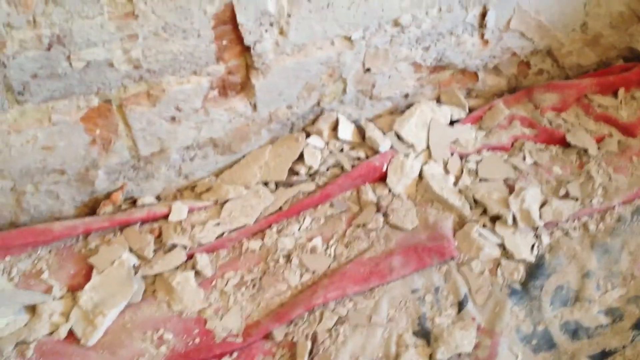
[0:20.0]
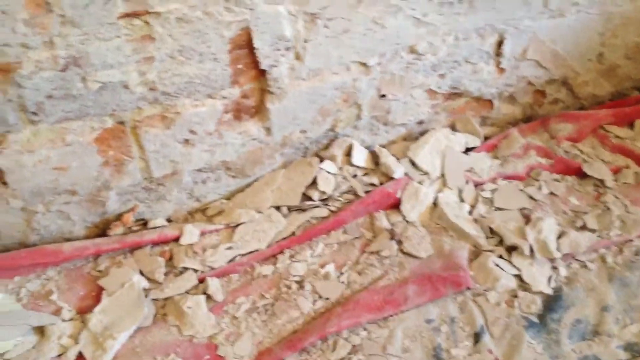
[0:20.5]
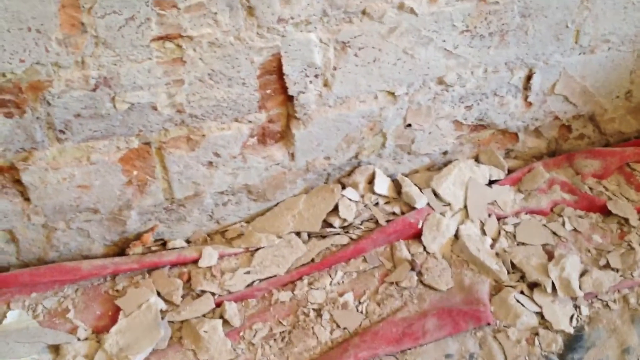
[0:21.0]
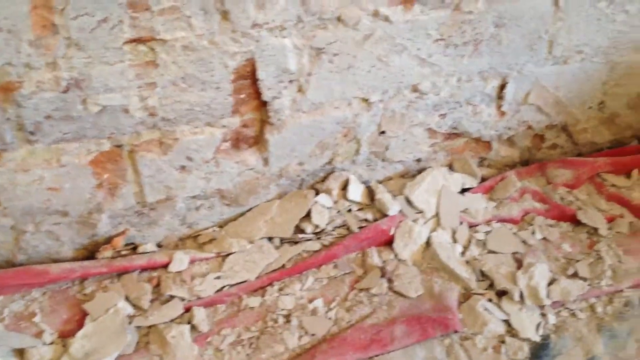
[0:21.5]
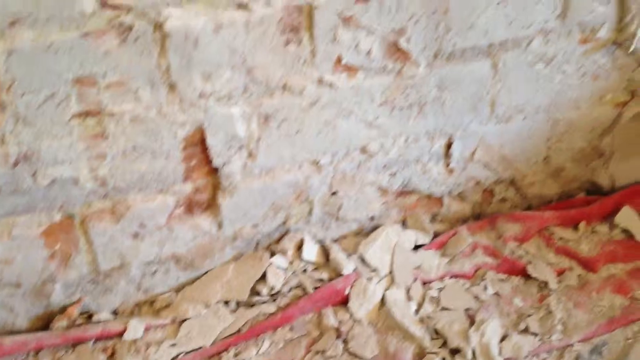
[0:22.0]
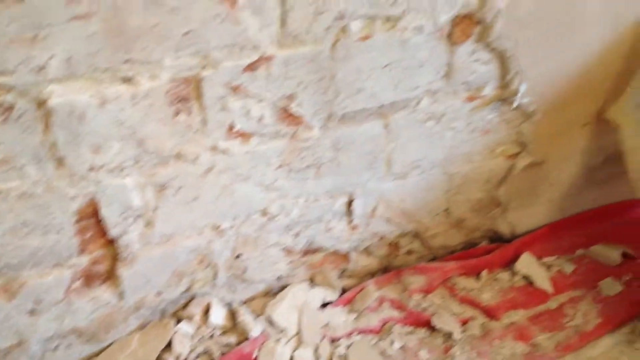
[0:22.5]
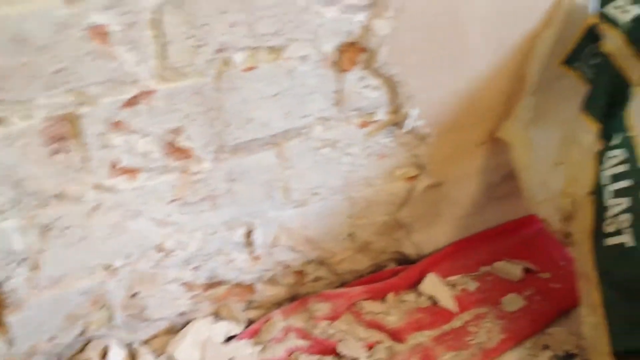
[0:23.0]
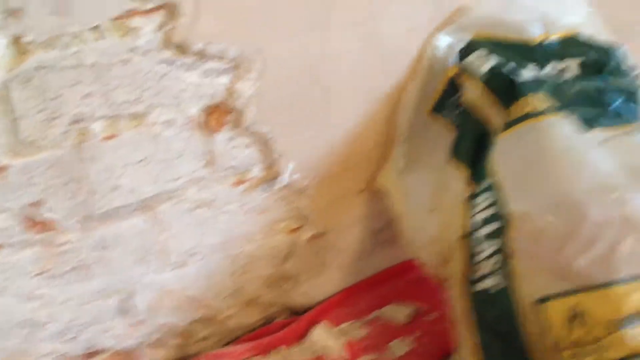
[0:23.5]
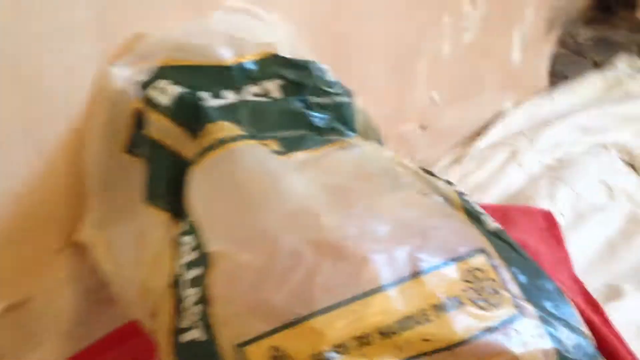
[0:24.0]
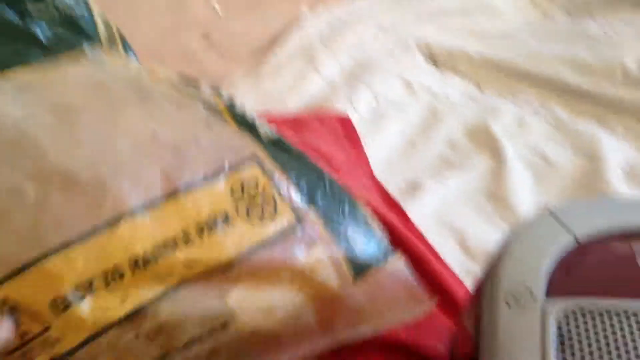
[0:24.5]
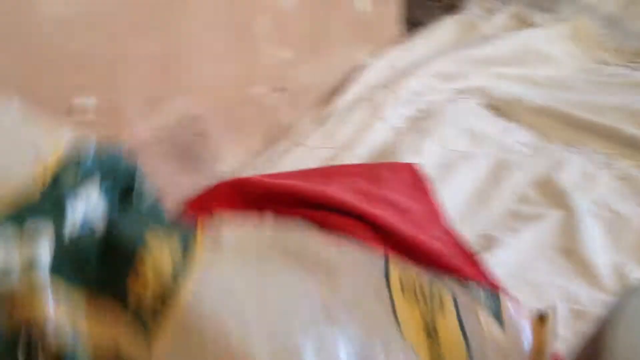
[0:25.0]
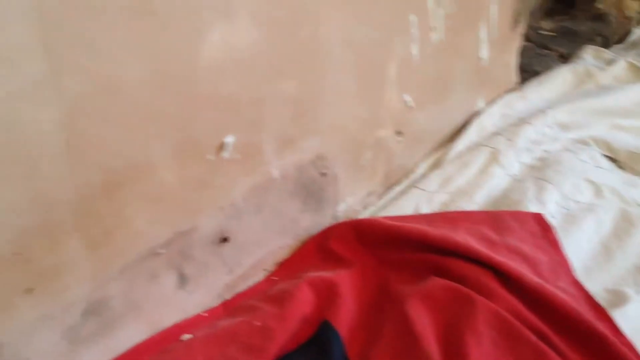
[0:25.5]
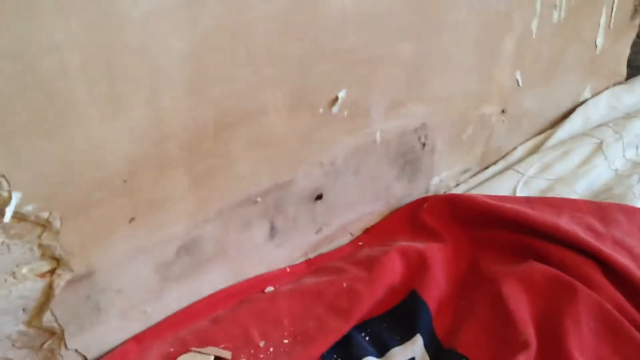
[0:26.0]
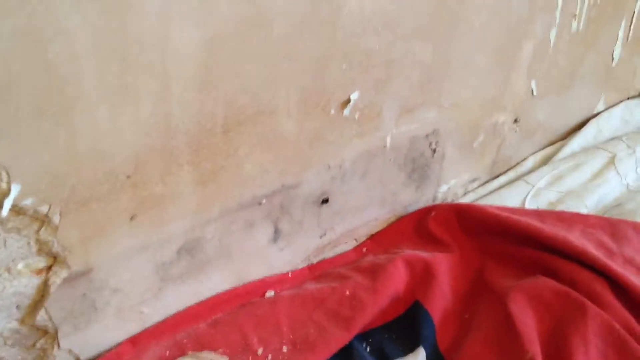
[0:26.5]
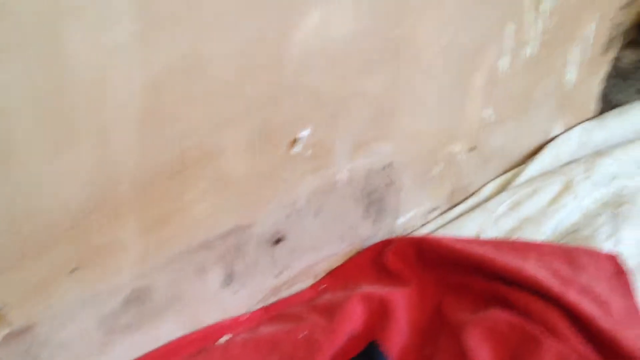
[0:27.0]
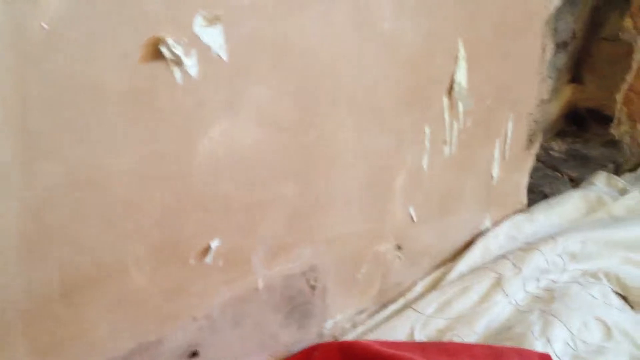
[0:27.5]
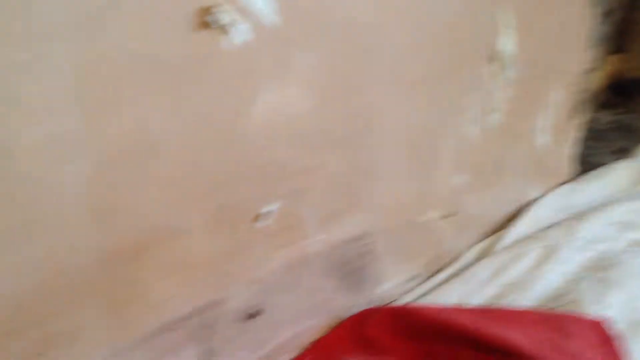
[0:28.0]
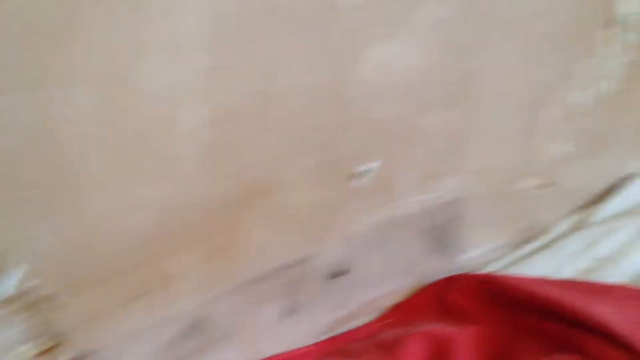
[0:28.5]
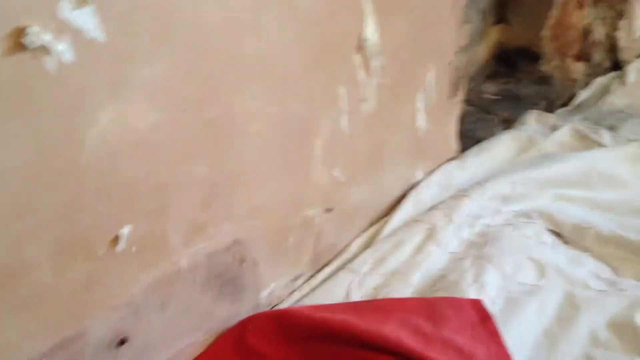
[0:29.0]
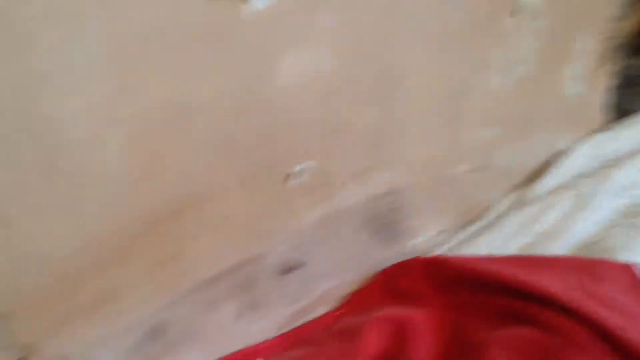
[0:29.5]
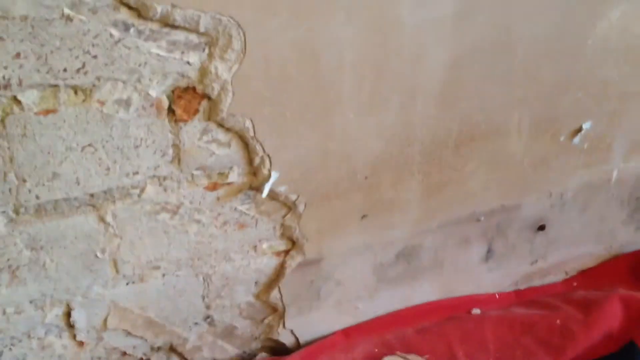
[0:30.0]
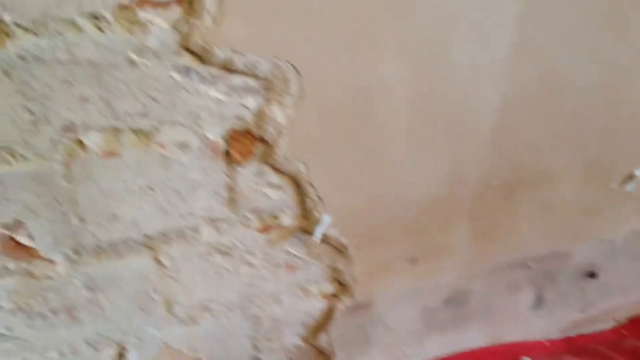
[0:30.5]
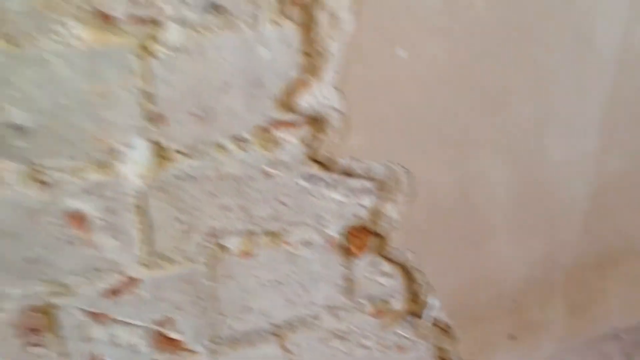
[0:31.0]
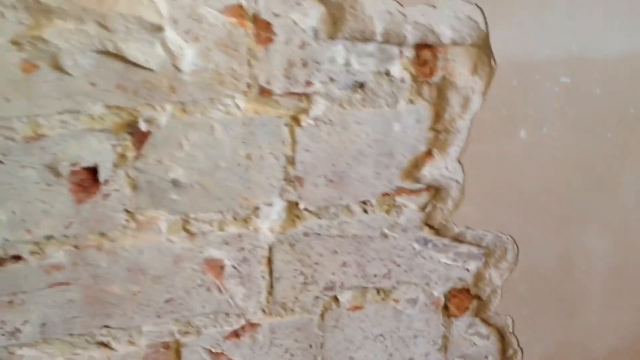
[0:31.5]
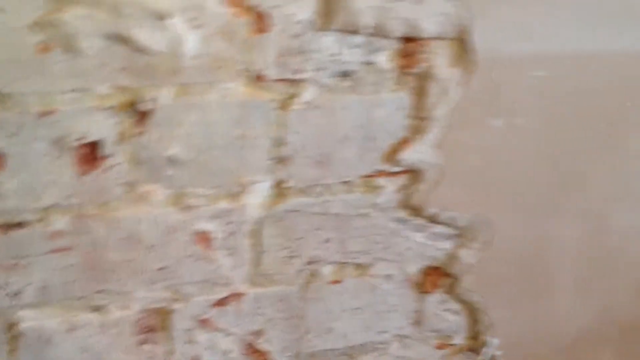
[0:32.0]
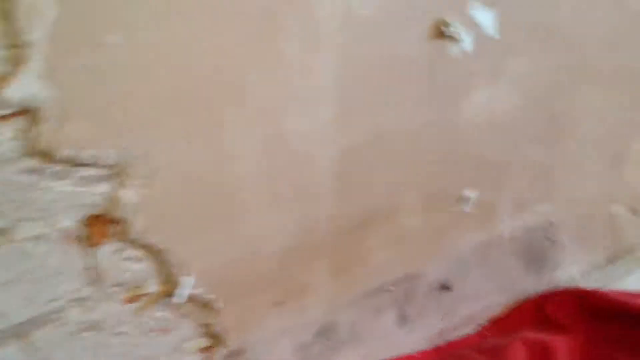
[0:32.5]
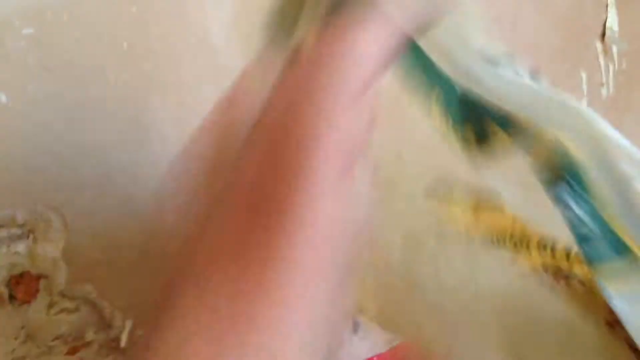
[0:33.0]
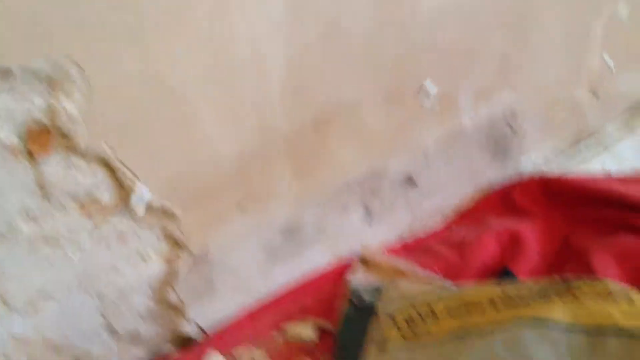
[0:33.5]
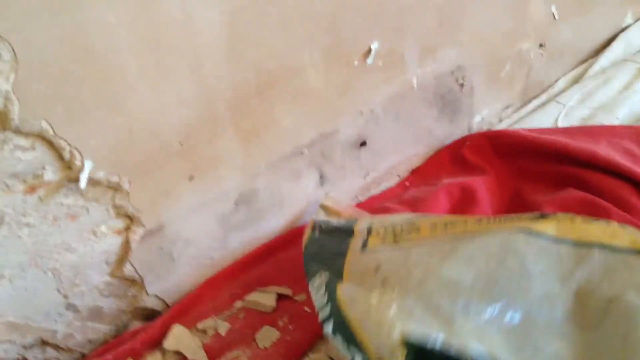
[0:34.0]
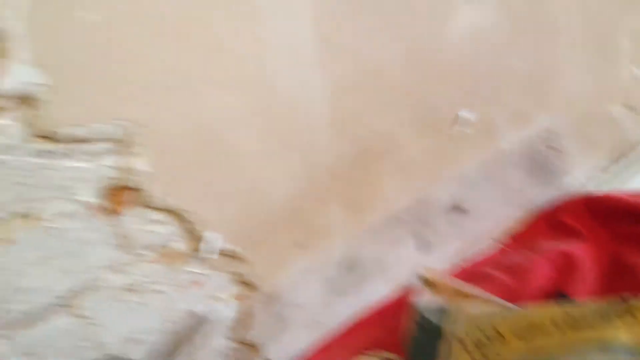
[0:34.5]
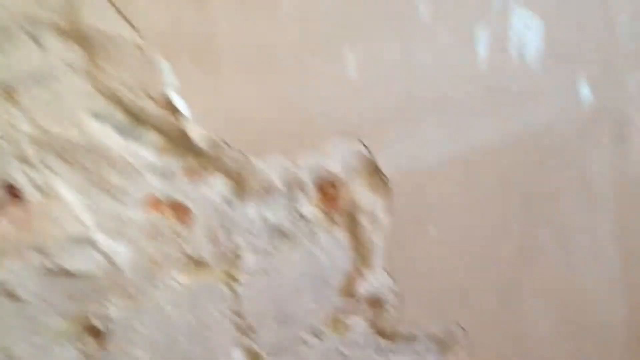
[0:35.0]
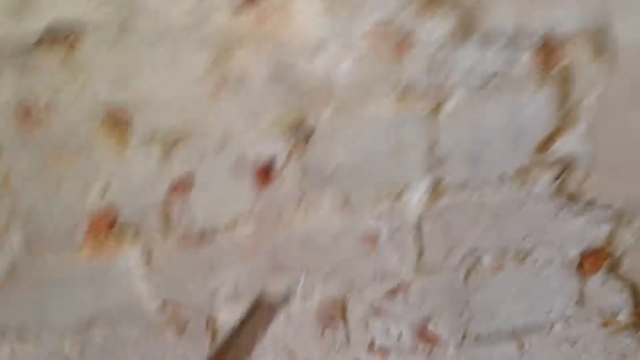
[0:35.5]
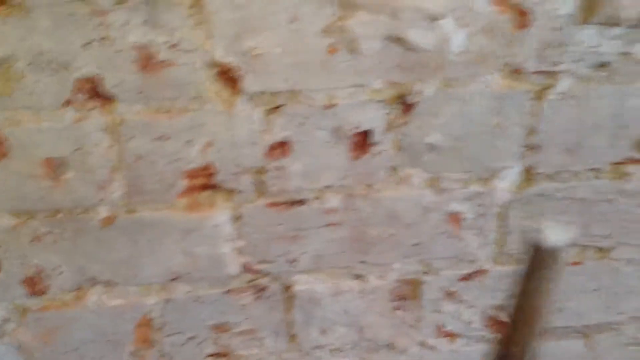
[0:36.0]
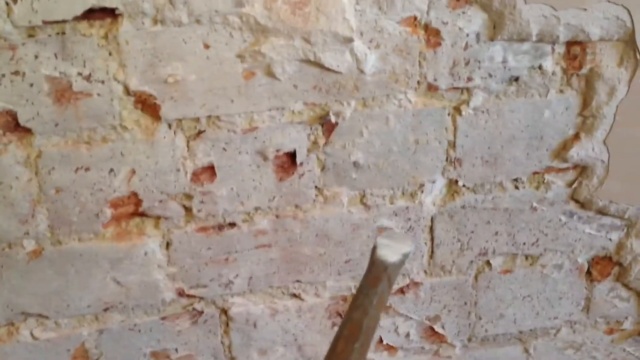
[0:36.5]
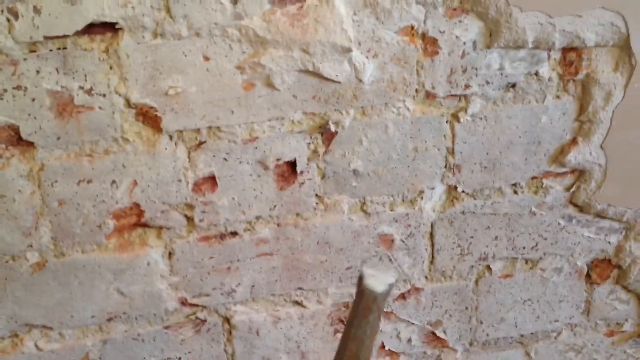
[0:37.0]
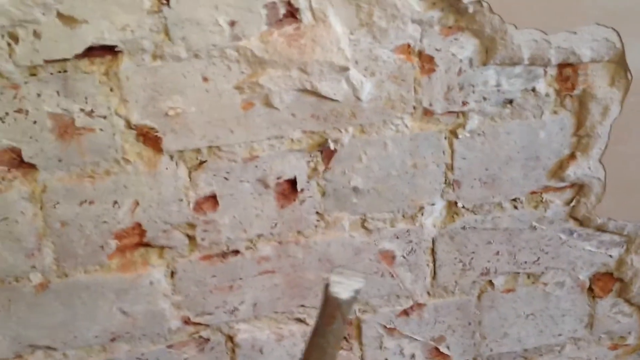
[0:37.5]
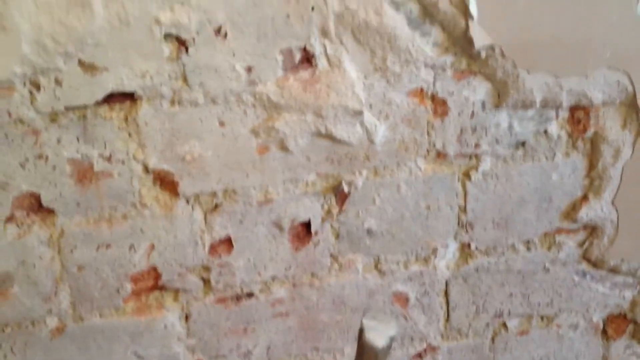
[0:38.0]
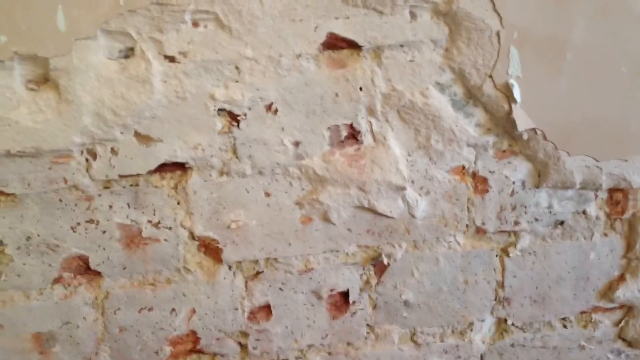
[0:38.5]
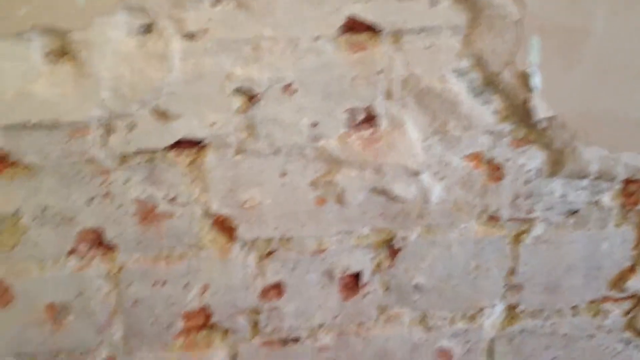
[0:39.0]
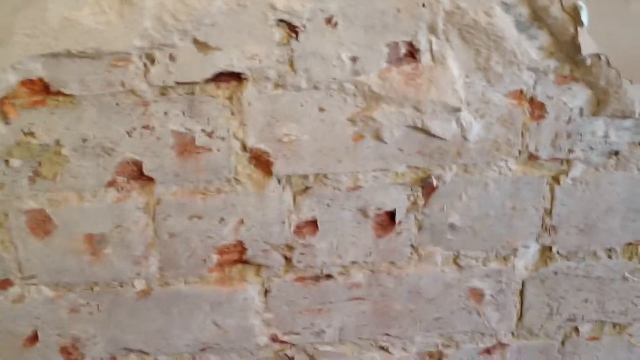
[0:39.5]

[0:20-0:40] The camera continues to pan, showing the ground before angling up toward the wall. It moves around physically without any zoom, and some blurriness appears when it moves as it automatically adjusts to the lighting in the room. The camera pans to show a bag being moved by a hand off screen, then pans left and right across a wall to show some sort of detail. It continues panning along the wall from left to right before a hand becomes visible, moving the green bag back into frame; the hand protrudes from the bottom of the screen. The camera then points back at a brick wall, very close up, and the footage is slightly blurry and shaky. Shards of wall plaster and demolition debris are visible in the frame, though their full extent is unclear.